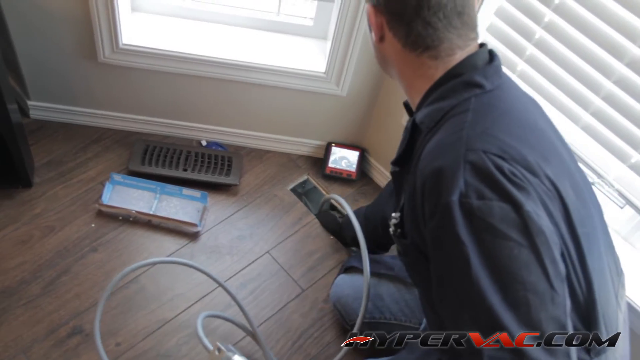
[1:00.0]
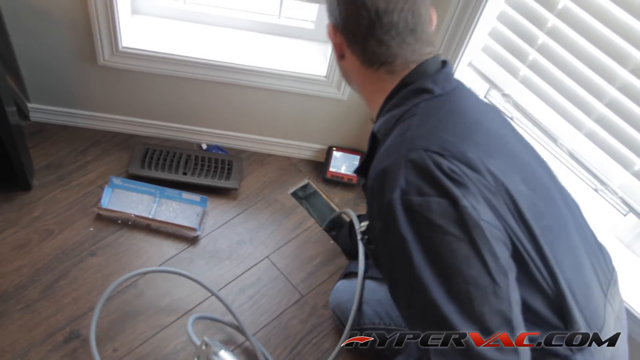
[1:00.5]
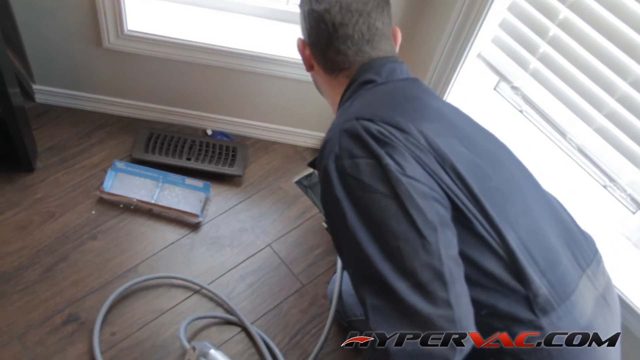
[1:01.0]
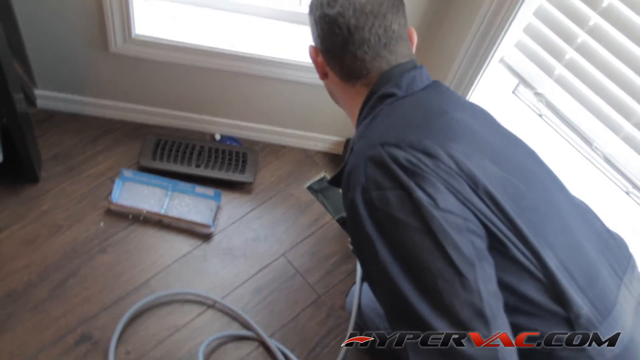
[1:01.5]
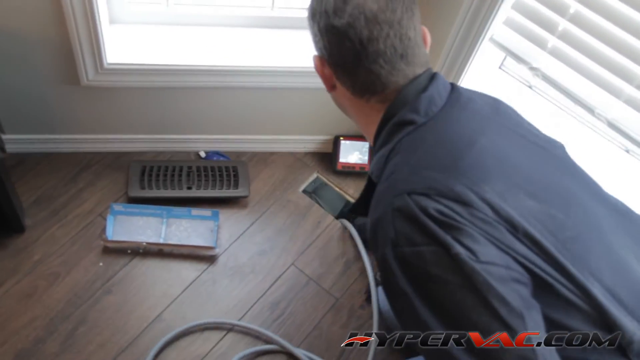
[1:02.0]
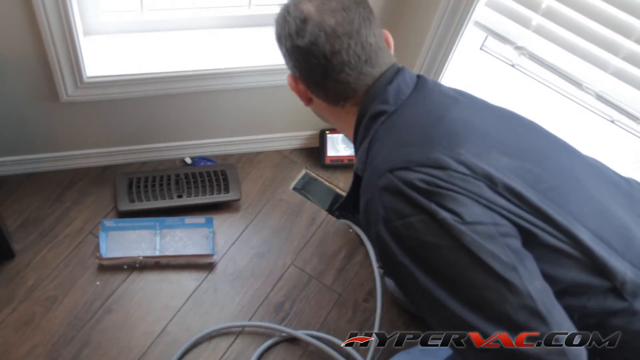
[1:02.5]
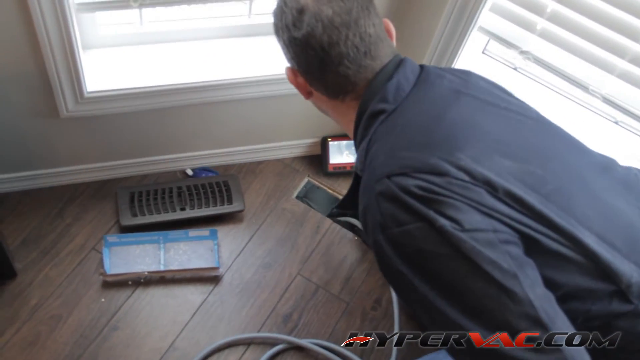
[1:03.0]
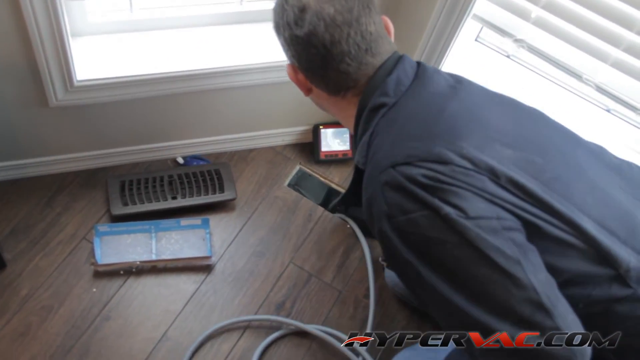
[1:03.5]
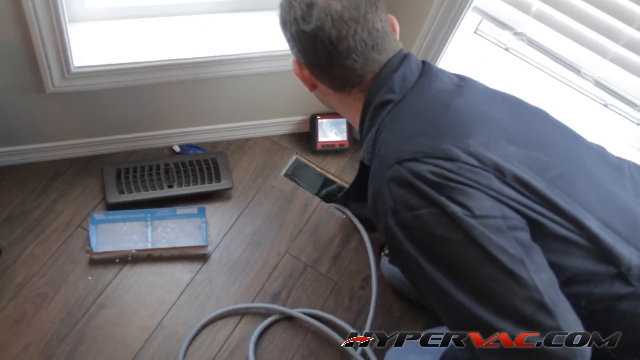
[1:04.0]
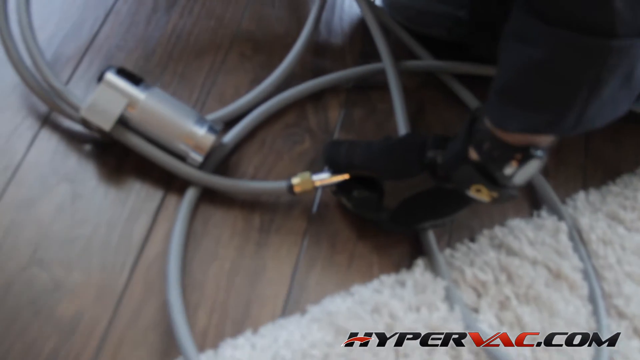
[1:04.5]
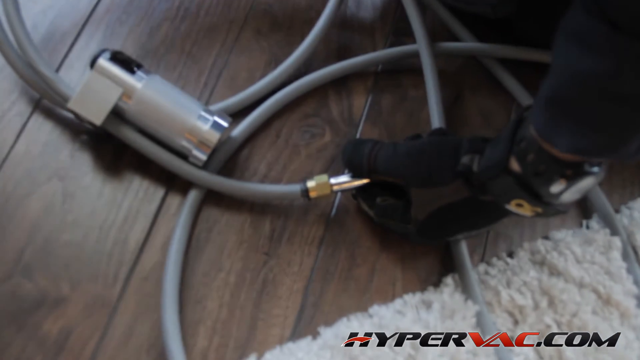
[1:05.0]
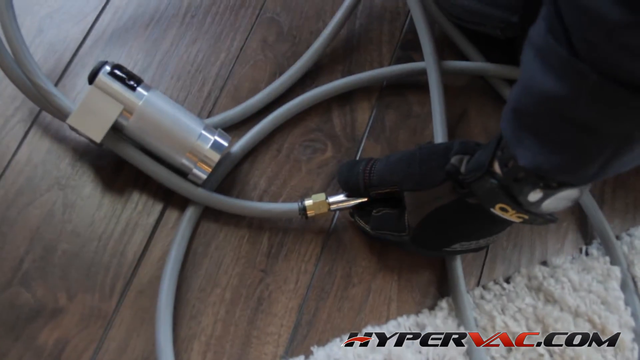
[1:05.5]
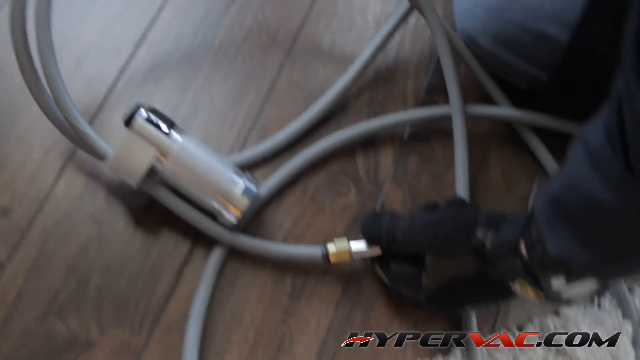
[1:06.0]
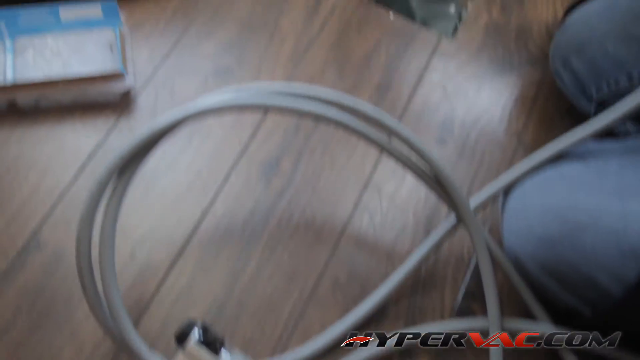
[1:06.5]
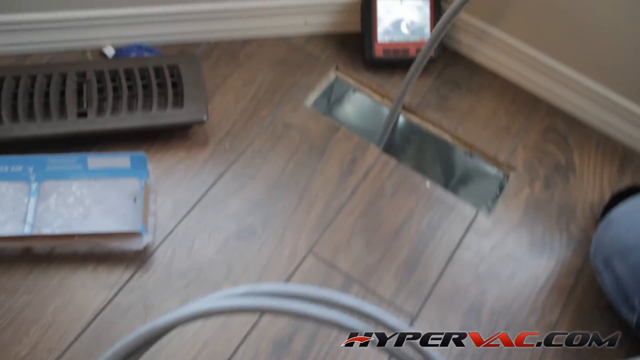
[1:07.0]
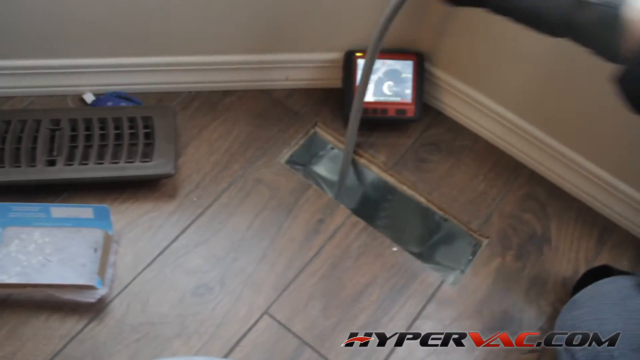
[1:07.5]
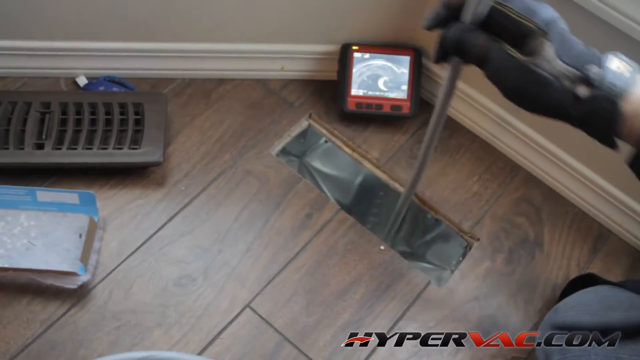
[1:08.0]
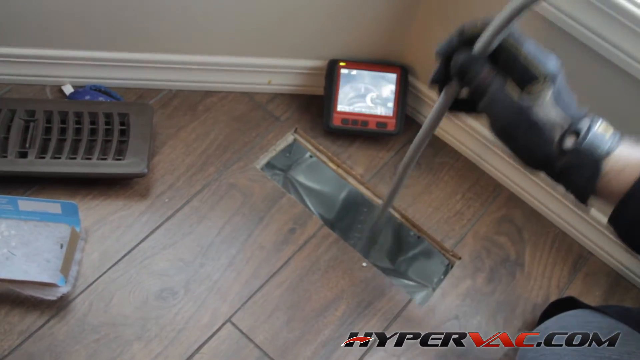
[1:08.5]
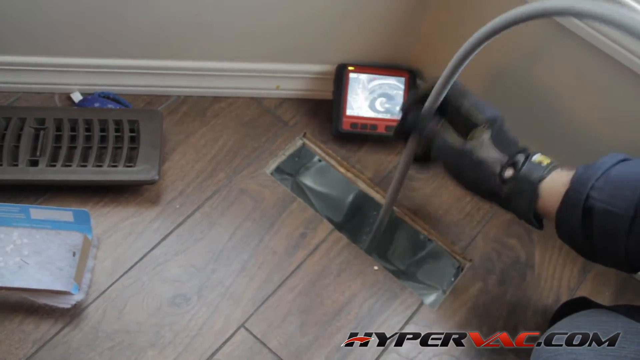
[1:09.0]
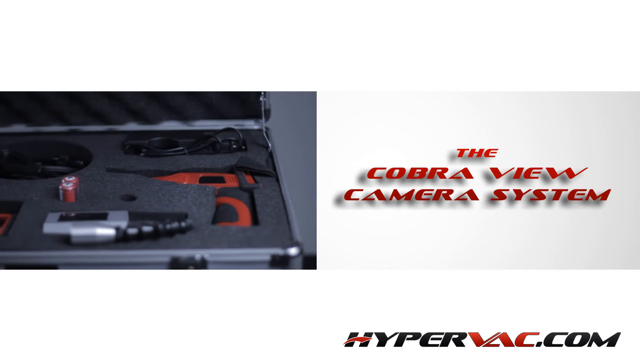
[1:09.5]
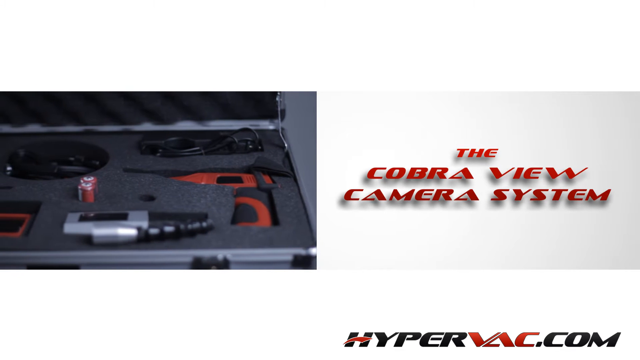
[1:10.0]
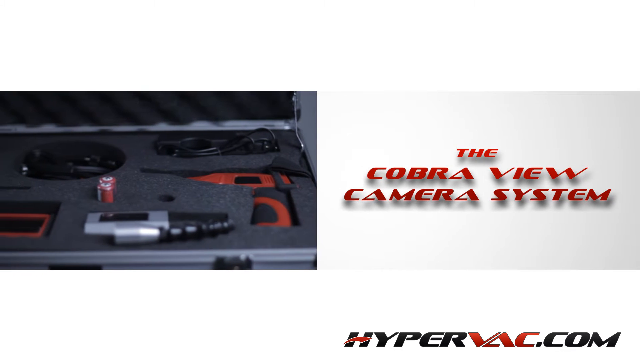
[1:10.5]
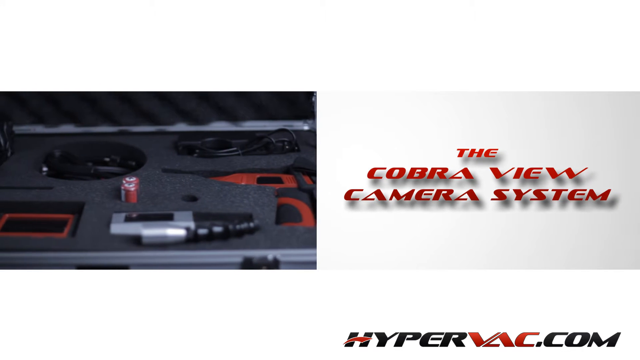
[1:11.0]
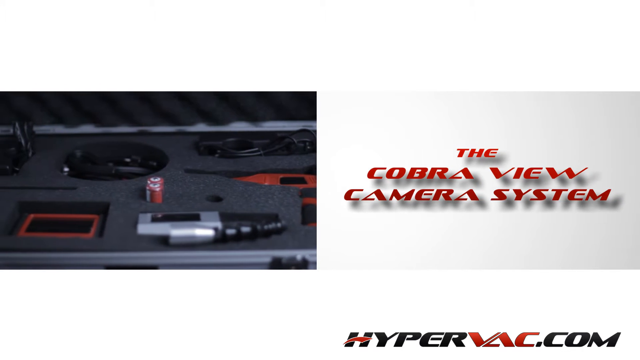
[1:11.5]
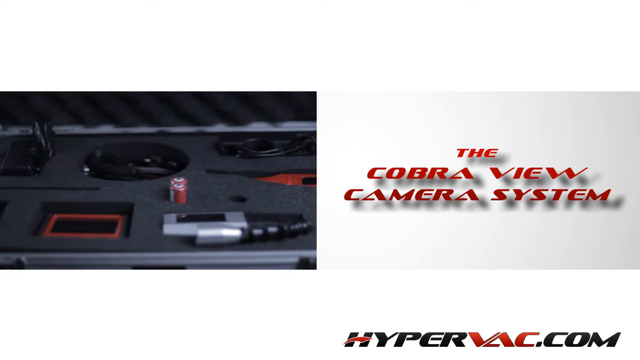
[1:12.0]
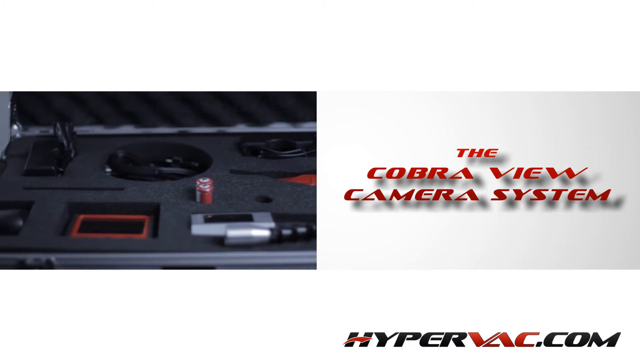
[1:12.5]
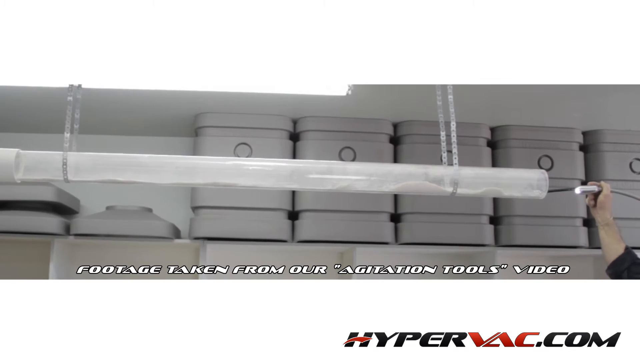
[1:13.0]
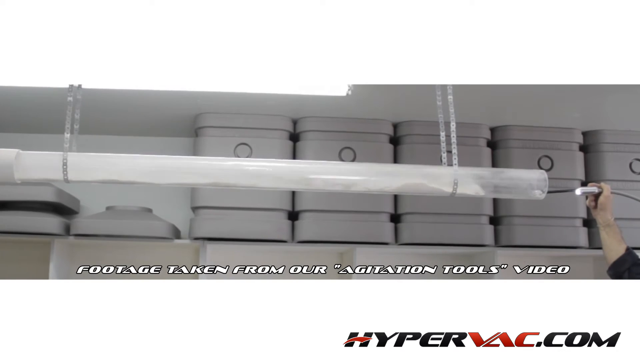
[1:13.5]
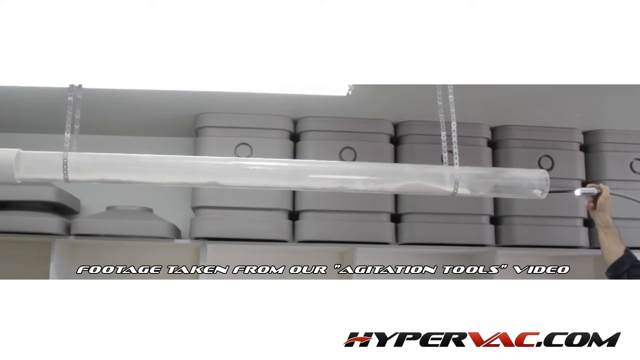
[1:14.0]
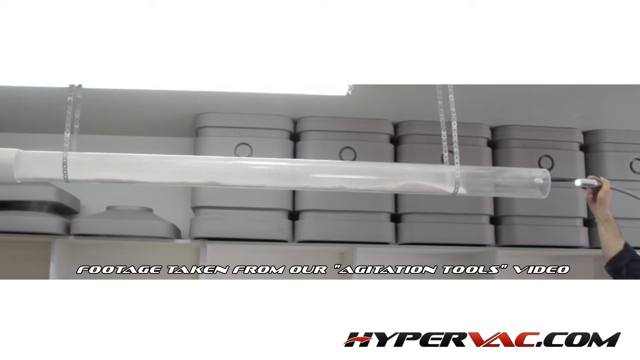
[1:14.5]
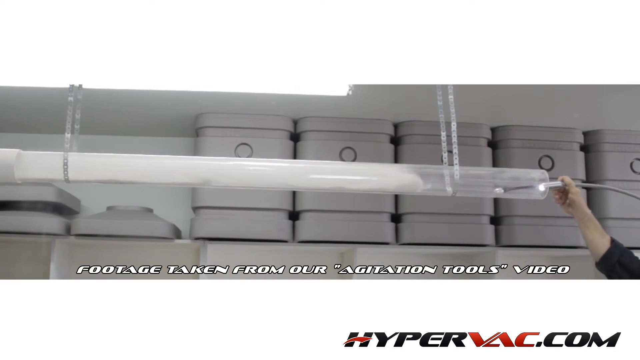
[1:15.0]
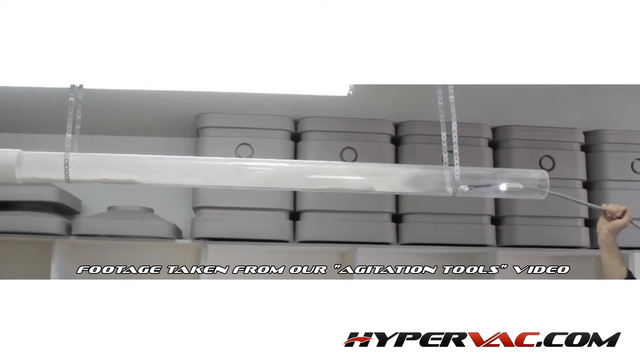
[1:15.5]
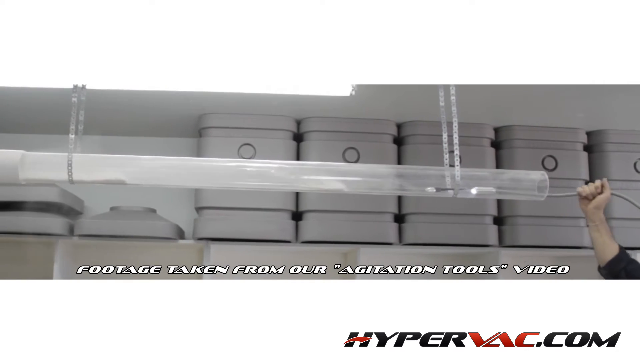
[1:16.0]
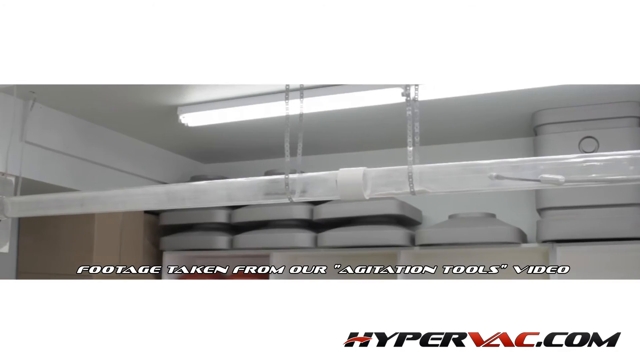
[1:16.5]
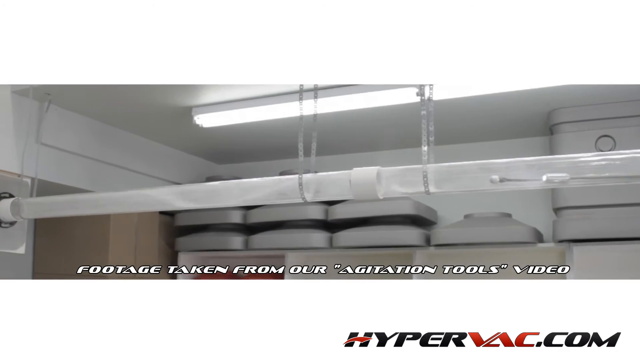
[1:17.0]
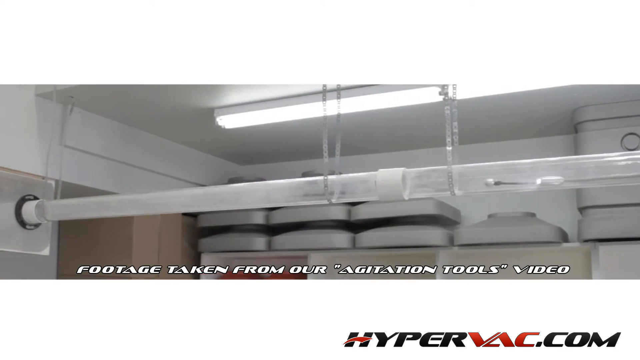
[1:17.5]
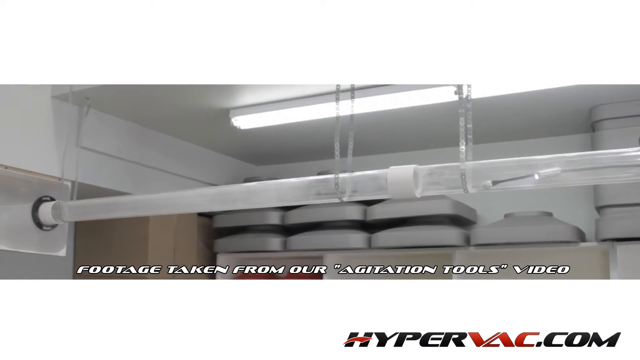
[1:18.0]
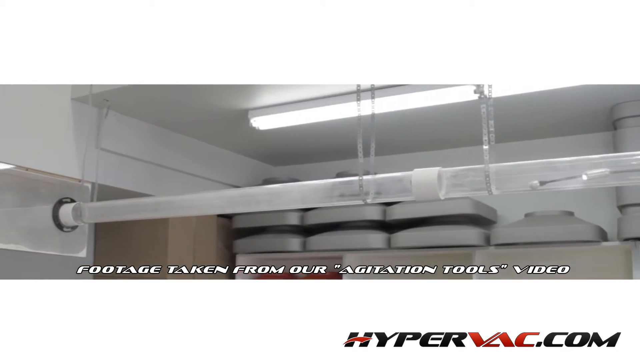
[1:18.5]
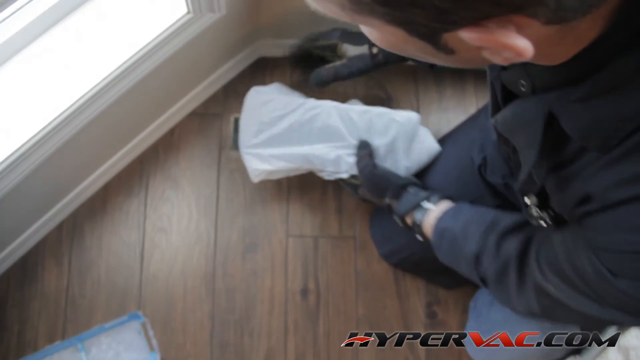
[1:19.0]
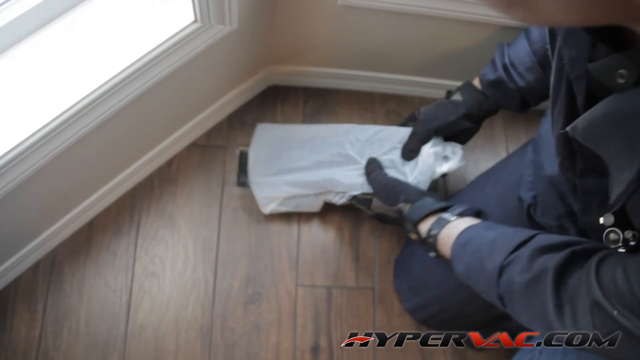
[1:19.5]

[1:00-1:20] The man in a black work outfit and blue jeans works on the house at a vent in the ground. Using some type of devices, he plugs a very long tube into the vent and stuffs it in very deeply. The tube has a camera on it, and he uses a small display while pushing the tube deeper; the view from the tube's camera is shown as it goes deeper and deeper into the vent. The video then cuts to text reading "the Cobra view camera system," showing the case that holds the device, along with the text "footage taken from our agitation tools video," and shows different uses of the device.